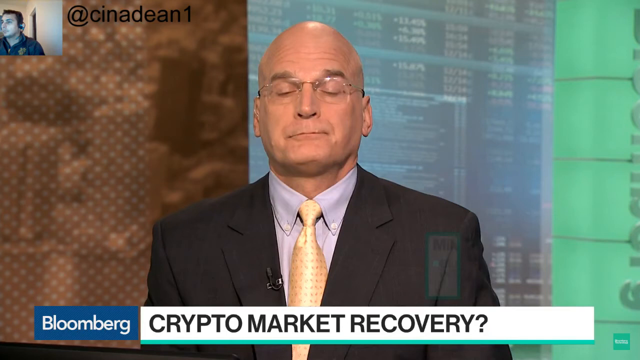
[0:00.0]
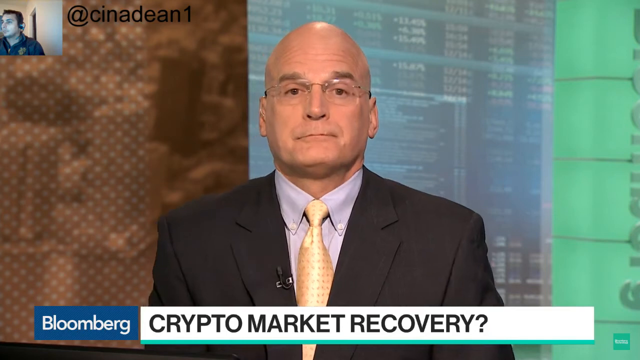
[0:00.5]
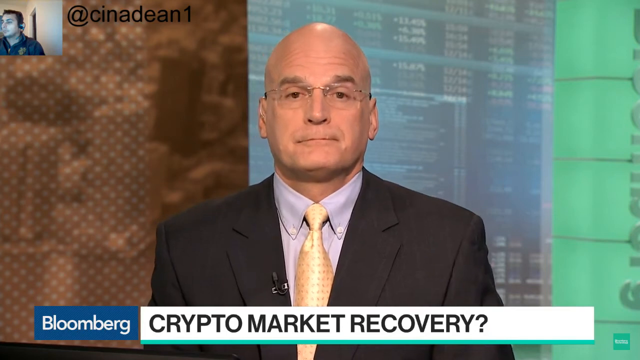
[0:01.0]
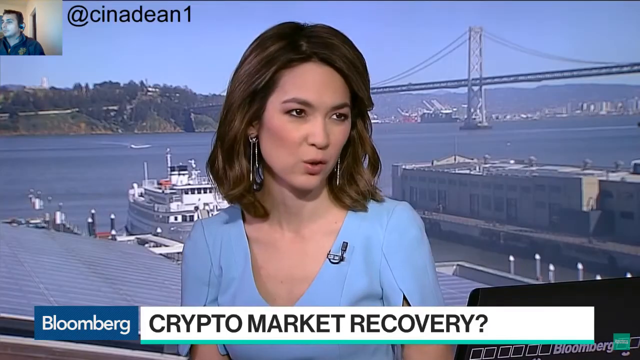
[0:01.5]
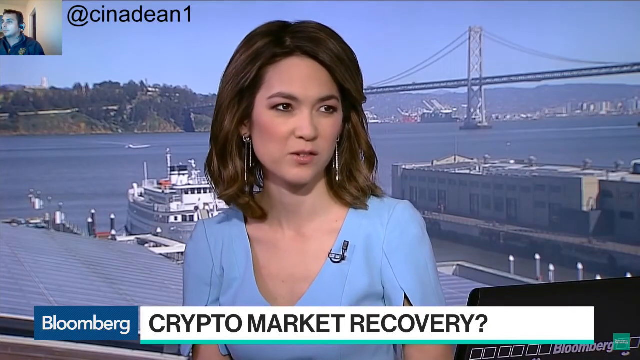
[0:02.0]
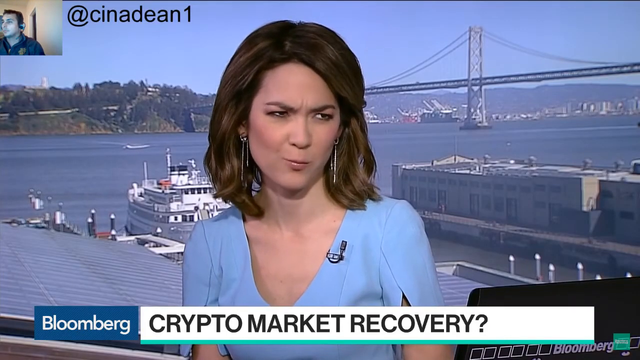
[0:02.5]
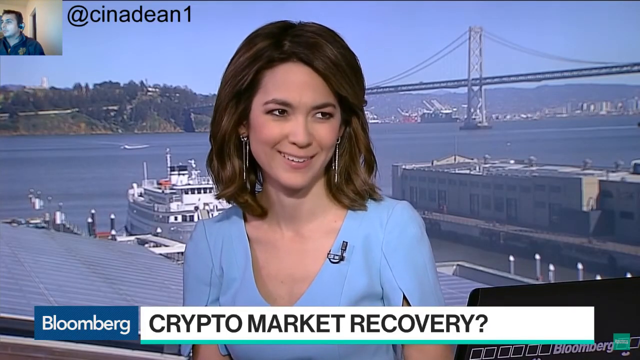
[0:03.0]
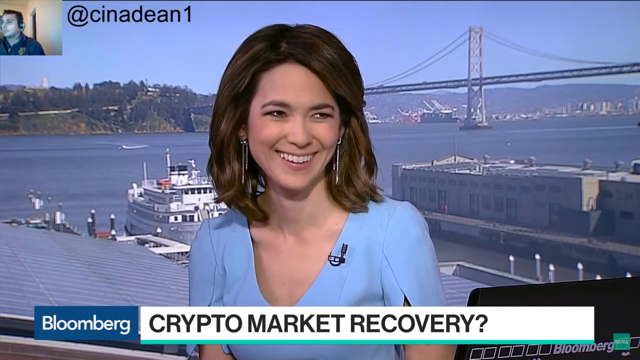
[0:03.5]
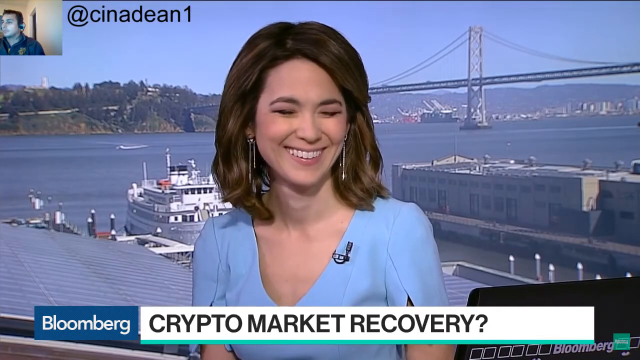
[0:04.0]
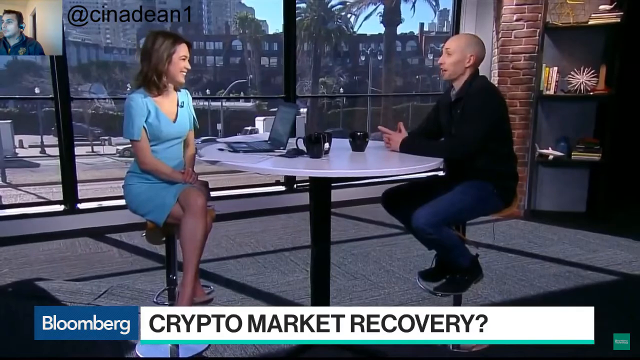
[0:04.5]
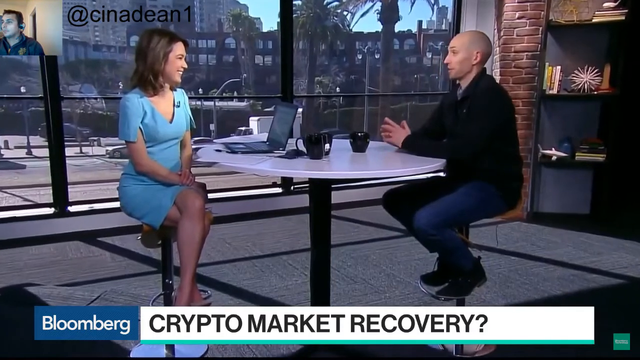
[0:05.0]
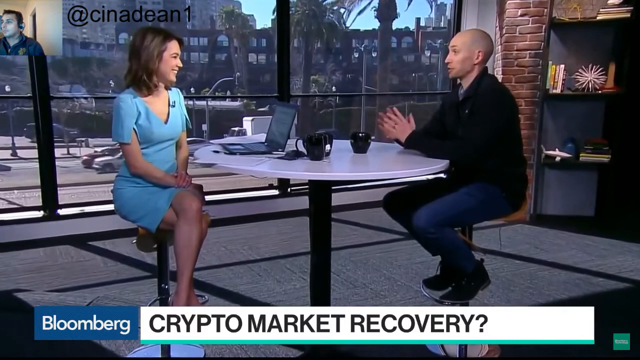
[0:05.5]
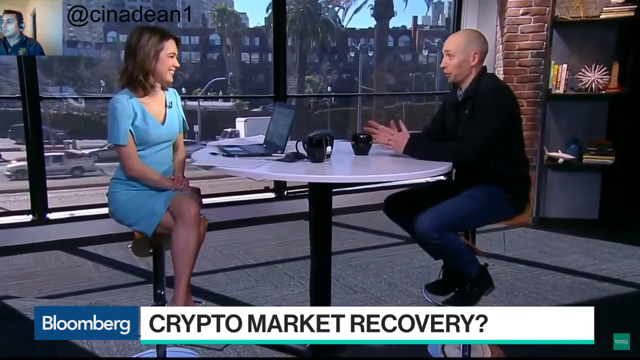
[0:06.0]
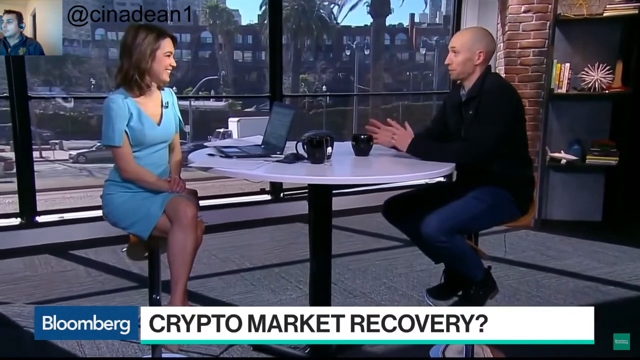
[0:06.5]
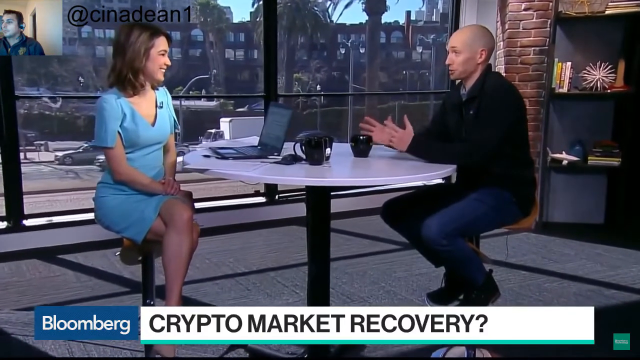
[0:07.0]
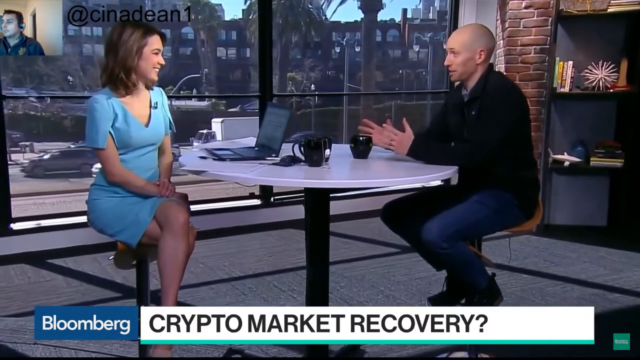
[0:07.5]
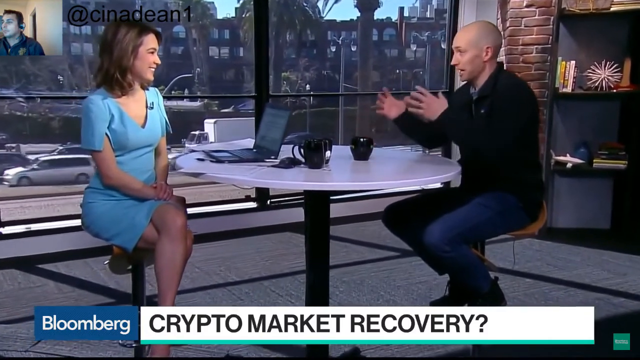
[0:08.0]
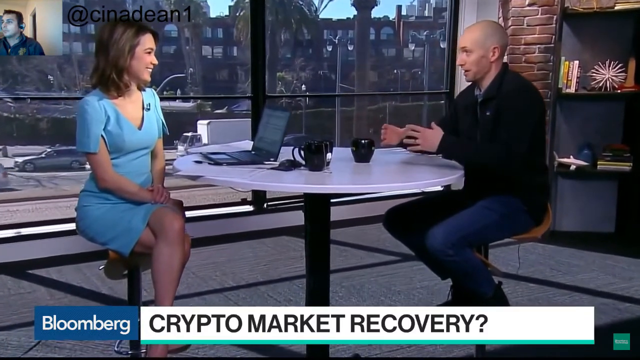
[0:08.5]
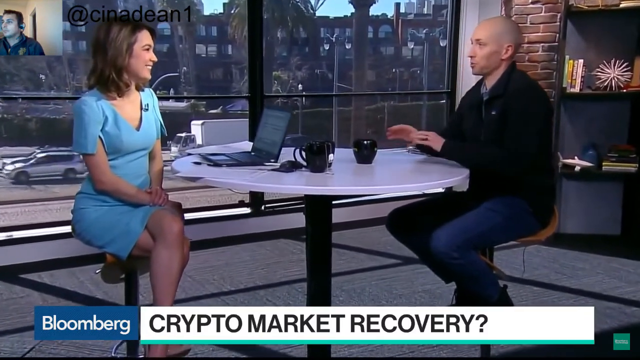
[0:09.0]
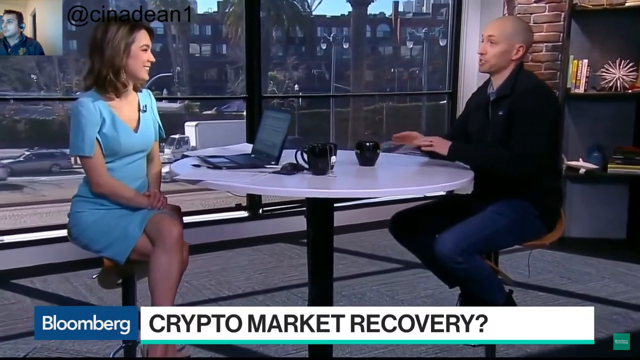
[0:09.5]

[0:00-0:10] A Bloomberg news channel segment is shown, with the headline "crypto market recovery". The text "Cinedine1" appears at the top left. A bald man in a grey suit, yellow tie and white shirt talks to a white woman in a blue dress who has a lapel mic on her dress. He seems to be talking, giggling and laughing. They sit around a round coffee table with a laptop, a mug and a plant, in what looks like a news headquarters.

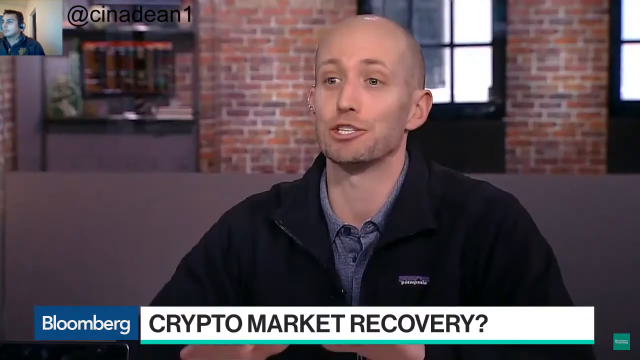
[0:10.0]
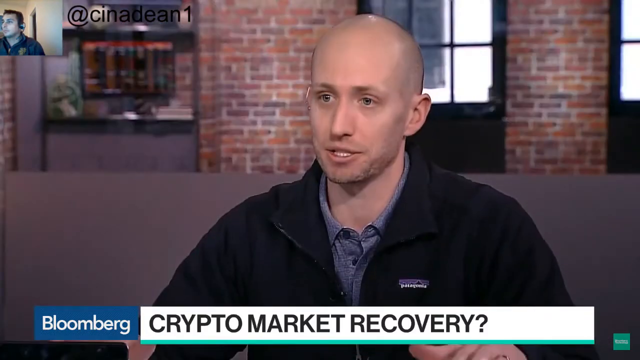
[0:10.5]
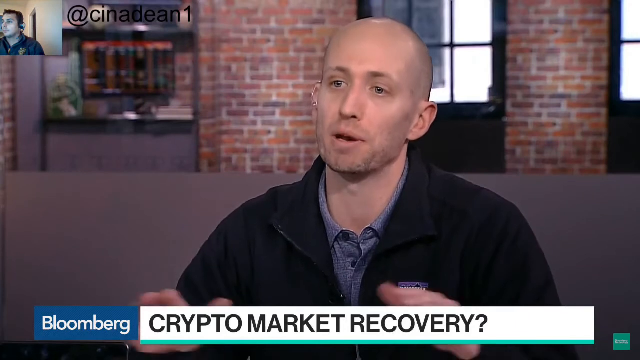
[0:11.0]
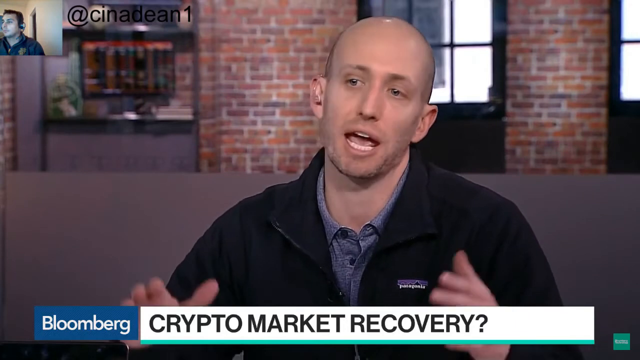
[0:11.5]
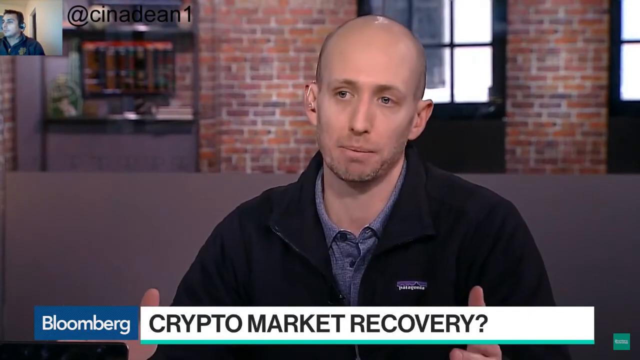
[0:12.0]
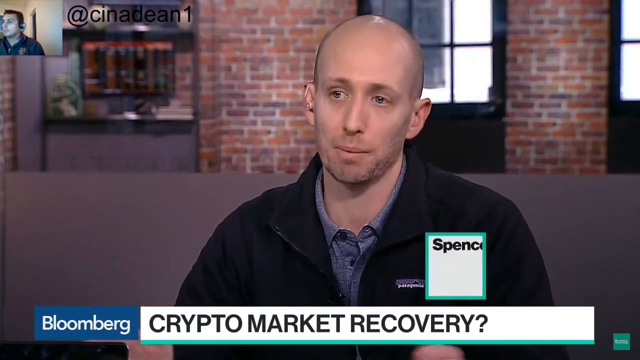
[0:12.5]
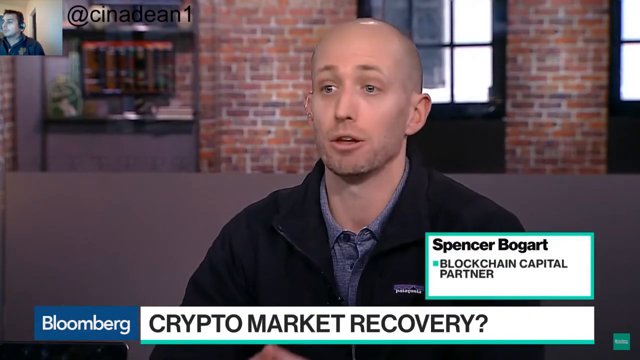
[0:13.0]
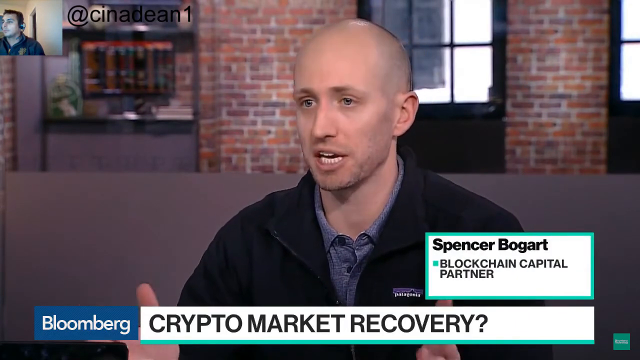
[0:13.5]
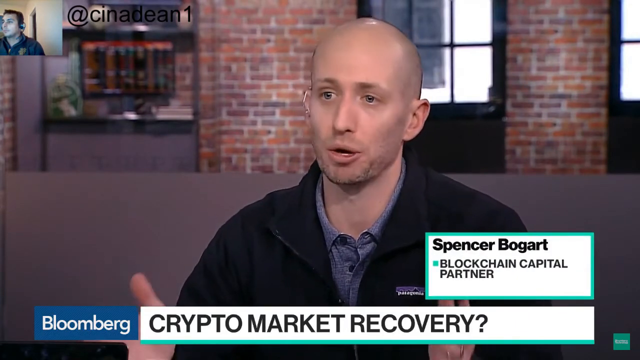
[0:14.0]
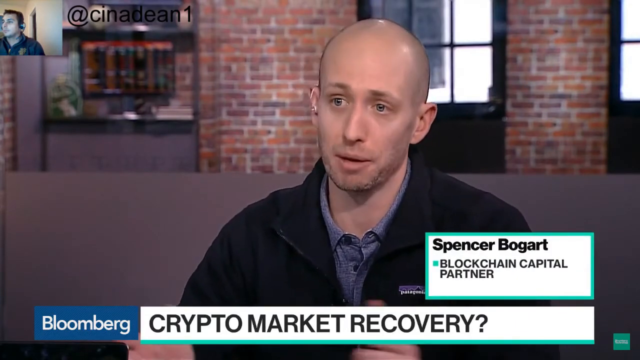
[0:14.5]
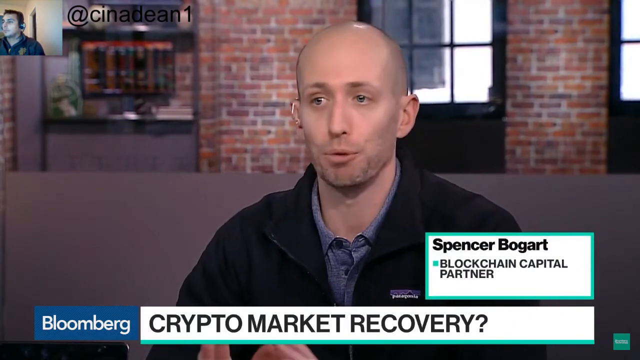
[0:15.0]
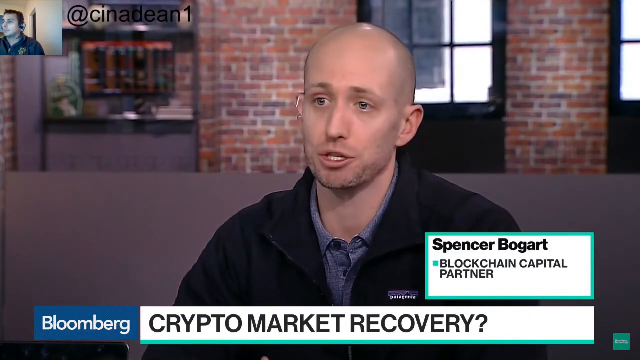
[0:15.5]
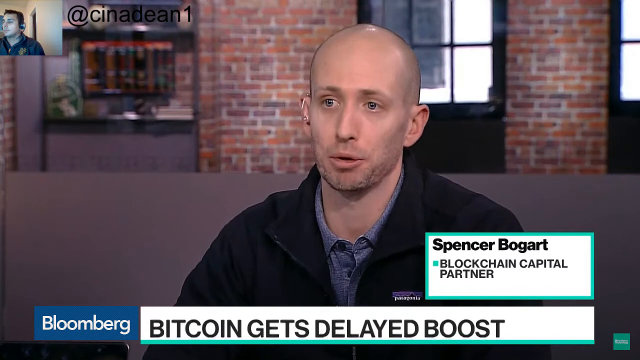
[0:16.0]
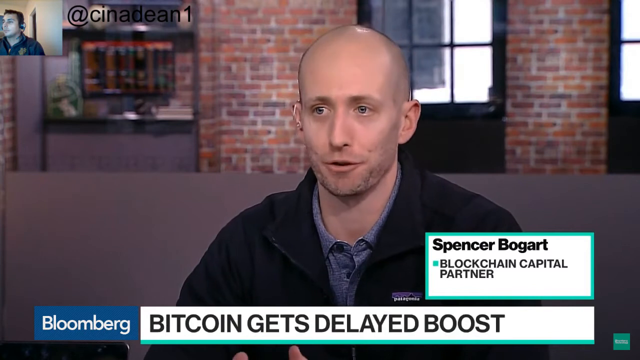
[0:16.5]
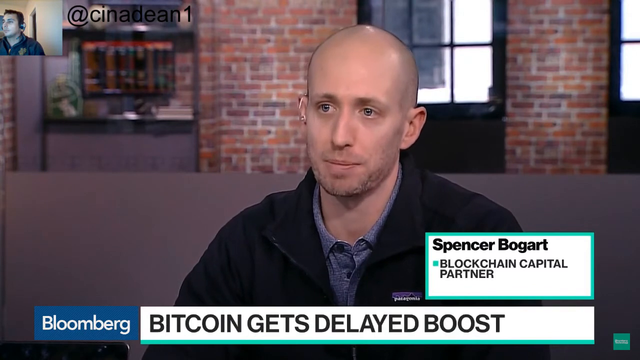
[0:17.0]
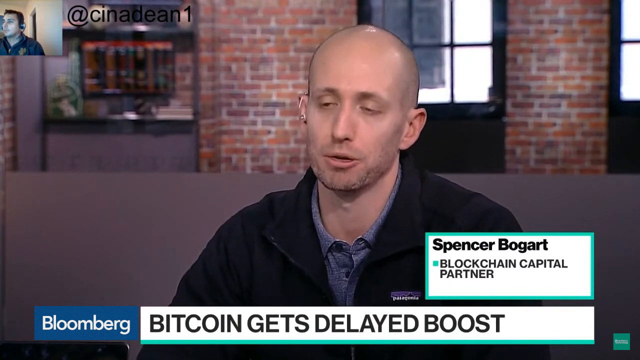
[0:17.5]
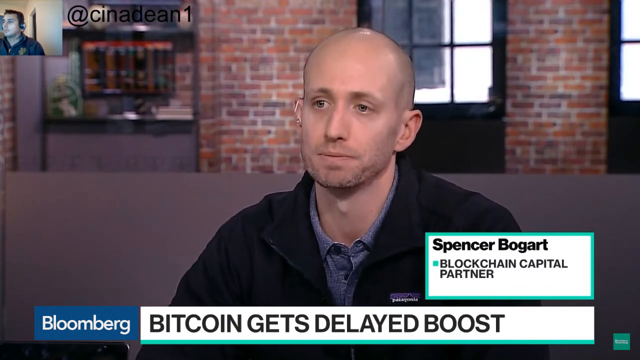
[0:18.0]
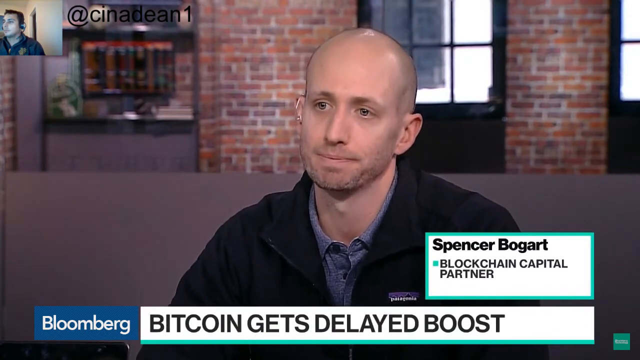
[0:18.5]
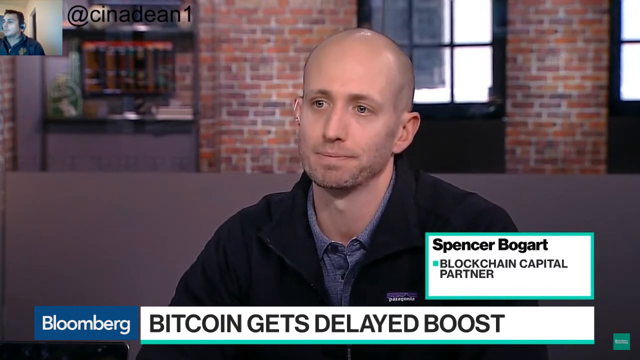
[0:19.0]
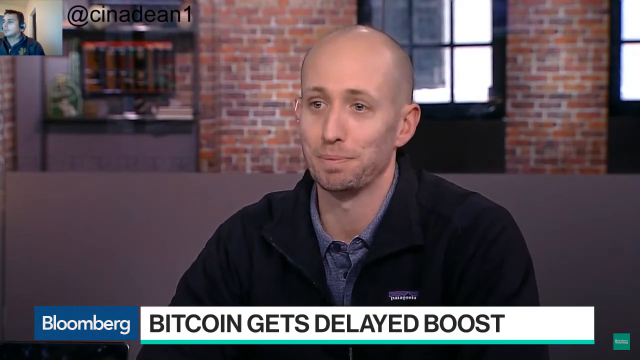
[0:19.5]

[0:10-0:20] A different bald man talks toward the camera, making hand gestures with good eye contact. He has small eyebrows, little earrings, a small face and a pretty skinny build, and wears a loose black jacket, a vest-type garment, over a blue shirt. Windows and brick walls are in the background.